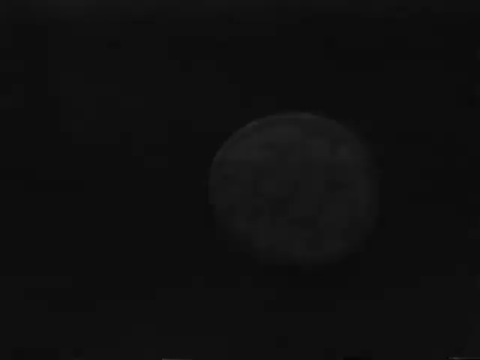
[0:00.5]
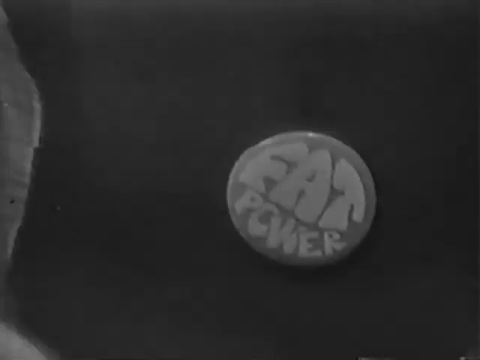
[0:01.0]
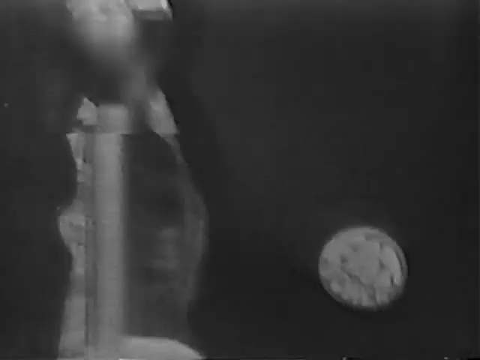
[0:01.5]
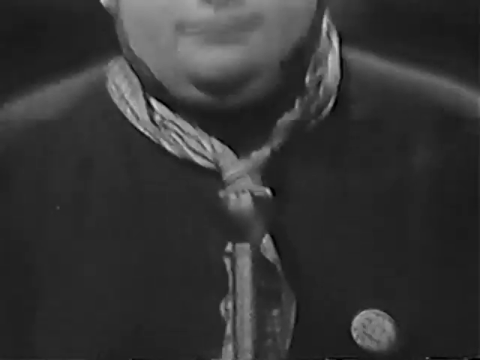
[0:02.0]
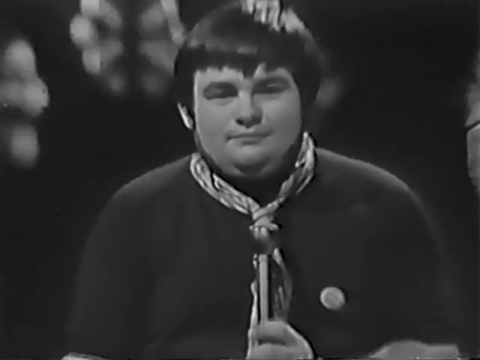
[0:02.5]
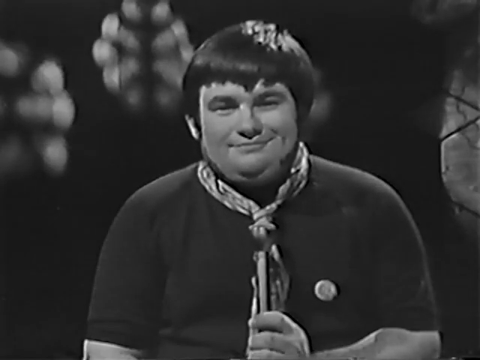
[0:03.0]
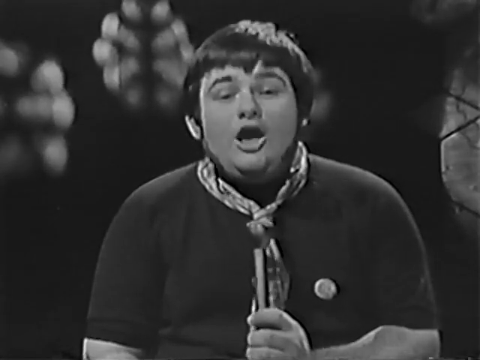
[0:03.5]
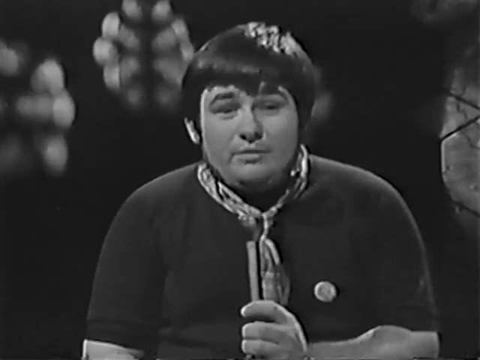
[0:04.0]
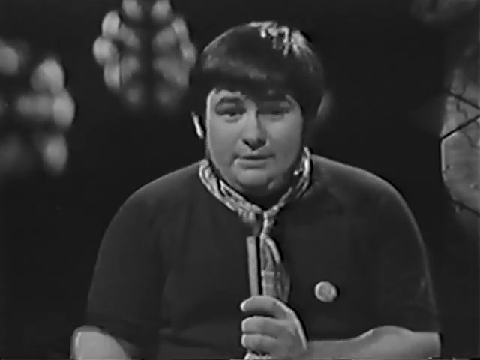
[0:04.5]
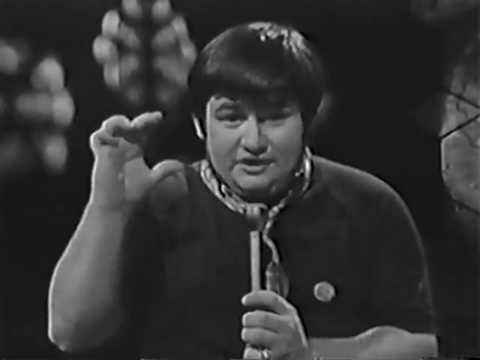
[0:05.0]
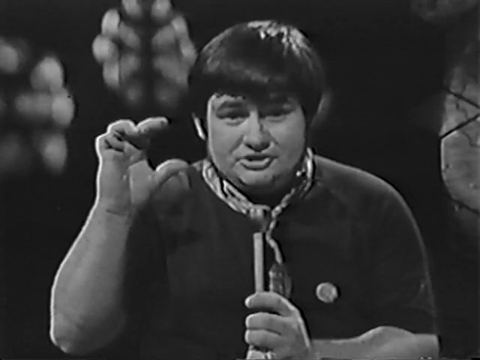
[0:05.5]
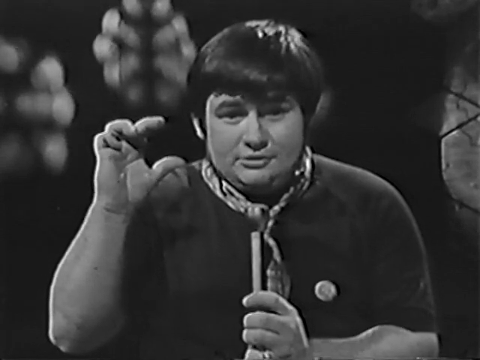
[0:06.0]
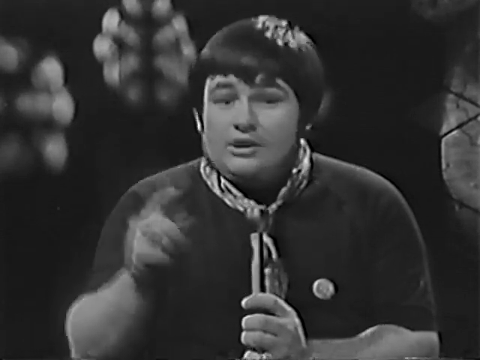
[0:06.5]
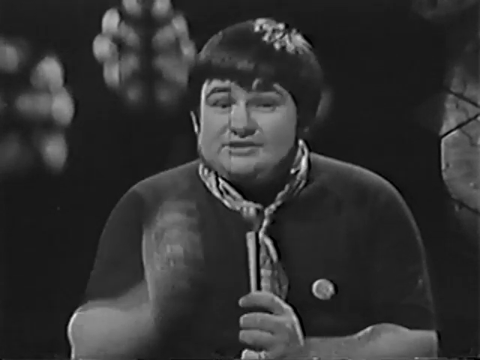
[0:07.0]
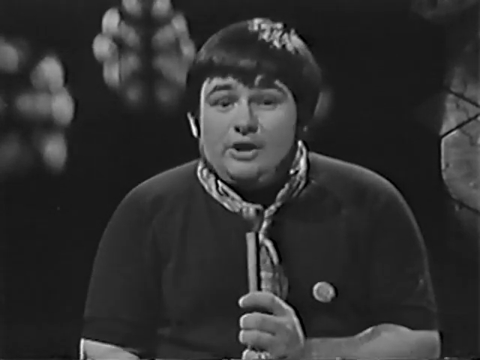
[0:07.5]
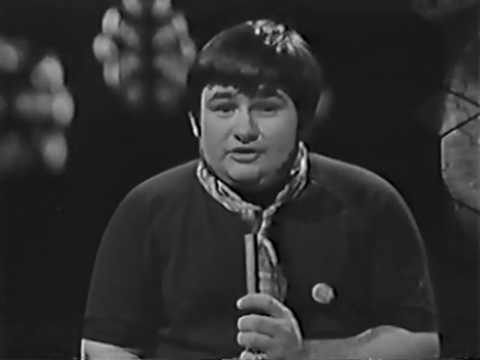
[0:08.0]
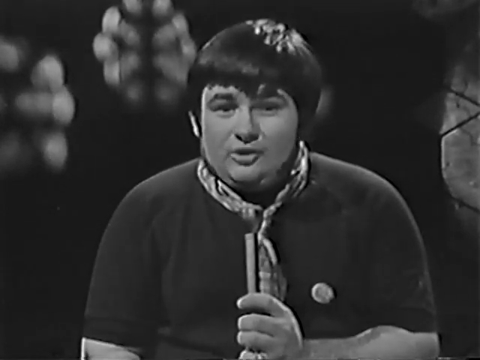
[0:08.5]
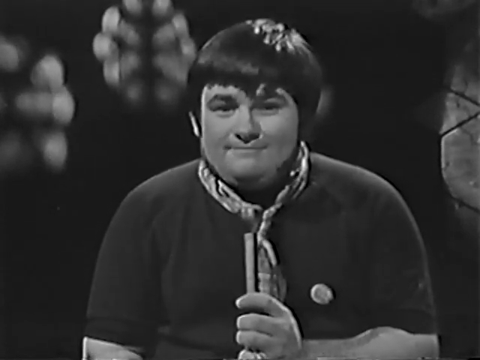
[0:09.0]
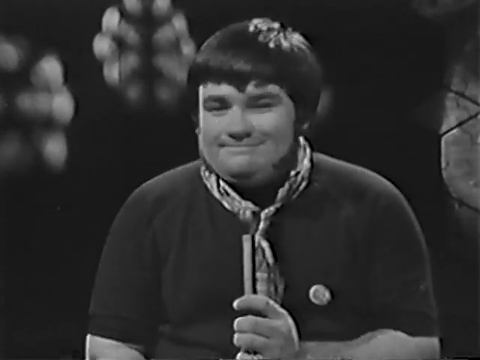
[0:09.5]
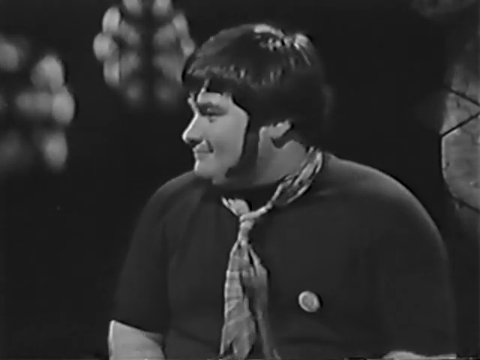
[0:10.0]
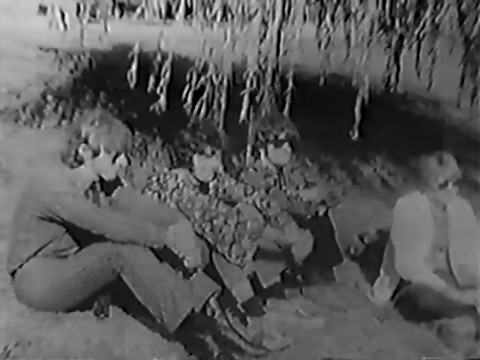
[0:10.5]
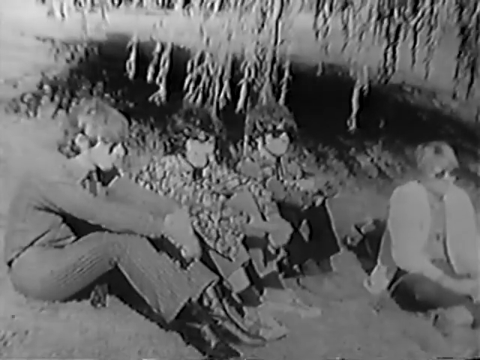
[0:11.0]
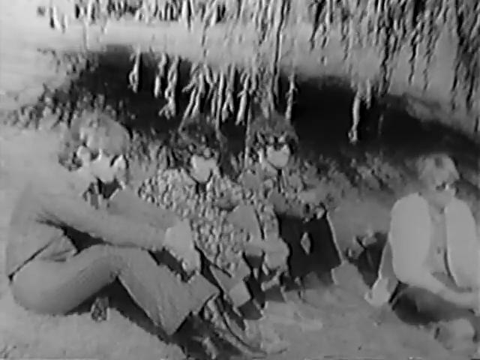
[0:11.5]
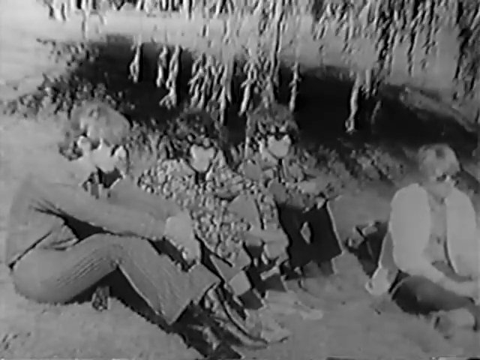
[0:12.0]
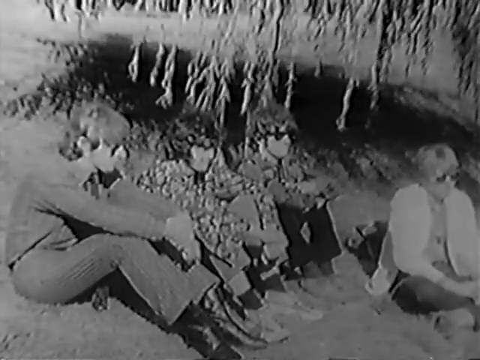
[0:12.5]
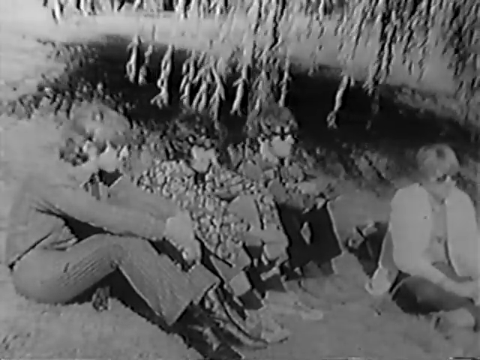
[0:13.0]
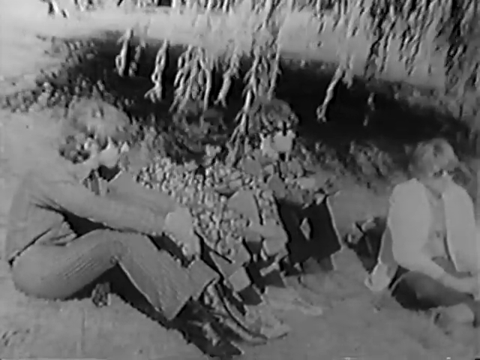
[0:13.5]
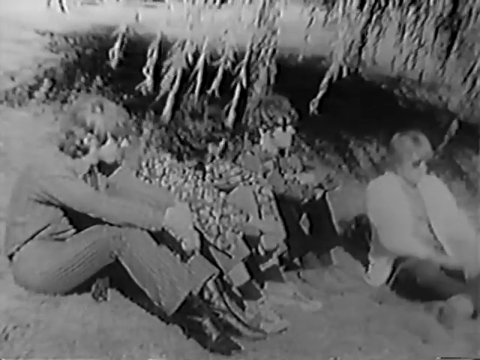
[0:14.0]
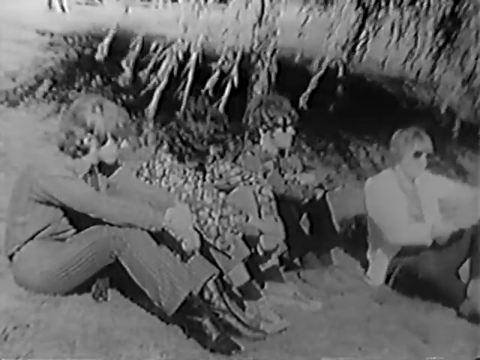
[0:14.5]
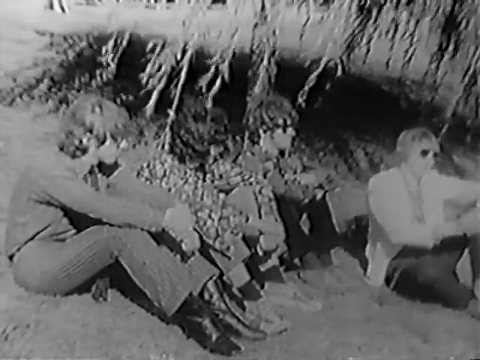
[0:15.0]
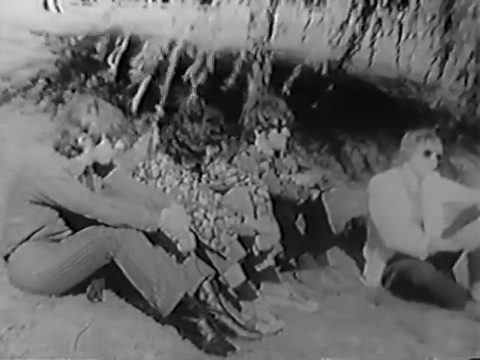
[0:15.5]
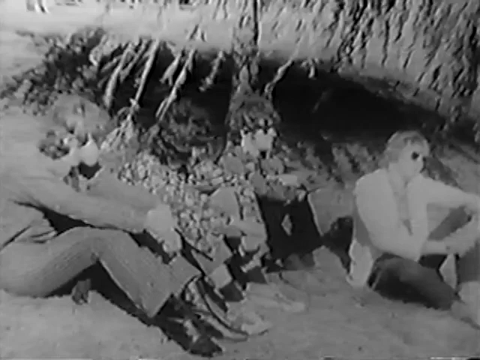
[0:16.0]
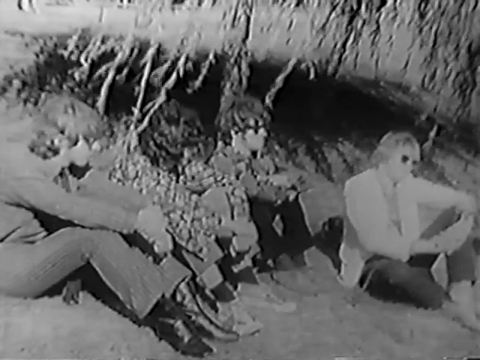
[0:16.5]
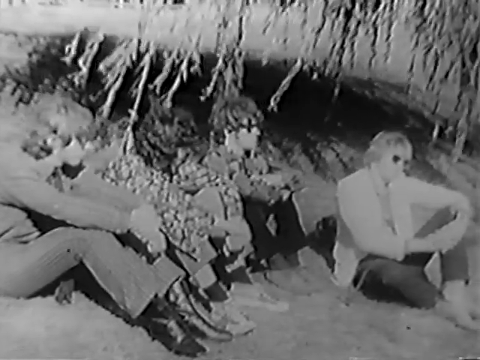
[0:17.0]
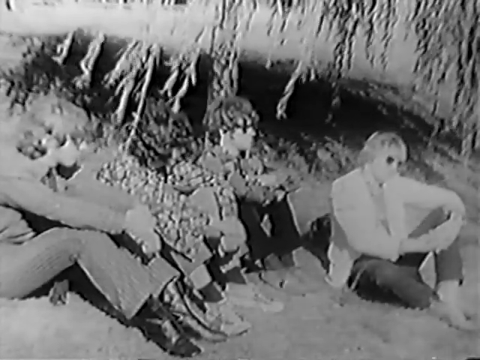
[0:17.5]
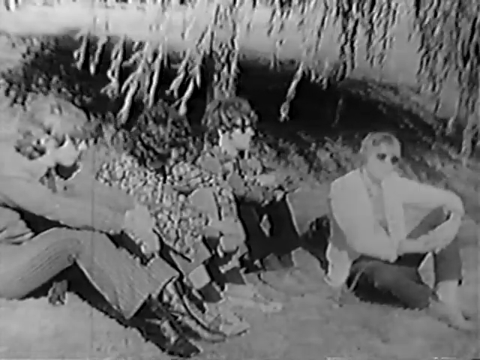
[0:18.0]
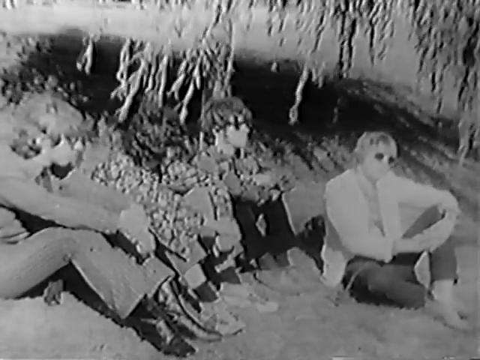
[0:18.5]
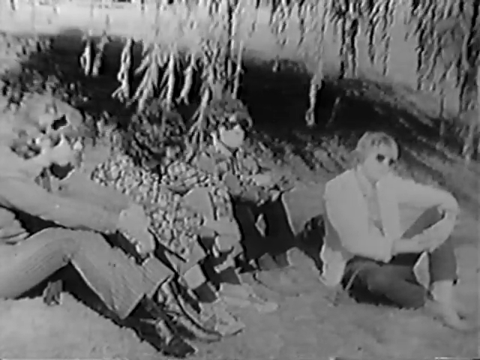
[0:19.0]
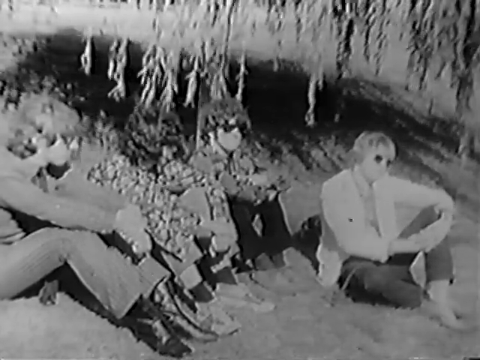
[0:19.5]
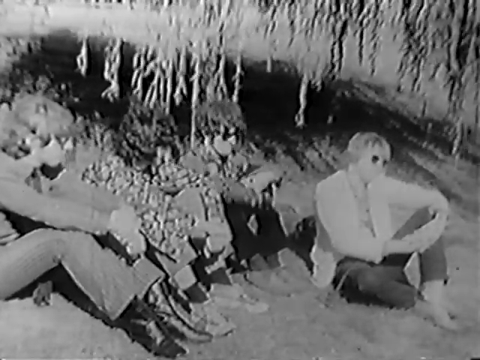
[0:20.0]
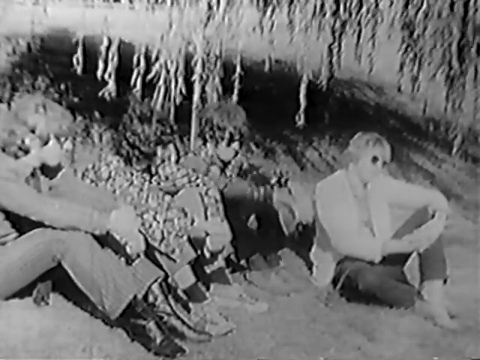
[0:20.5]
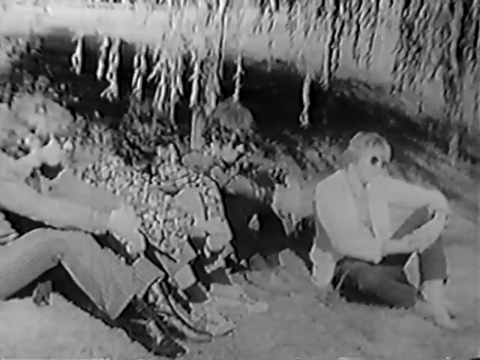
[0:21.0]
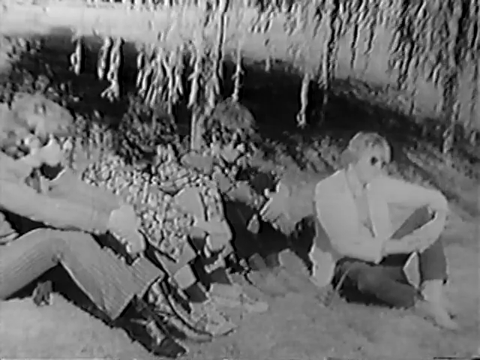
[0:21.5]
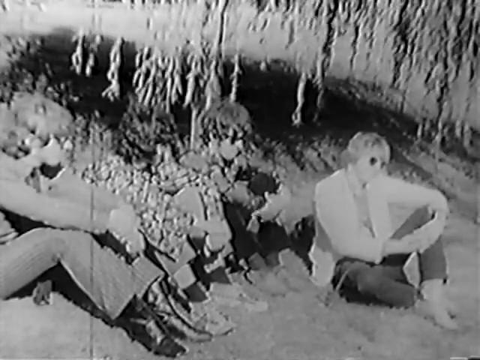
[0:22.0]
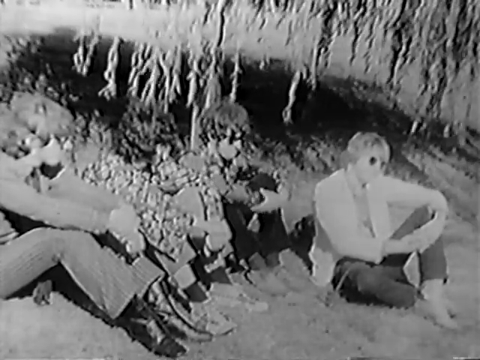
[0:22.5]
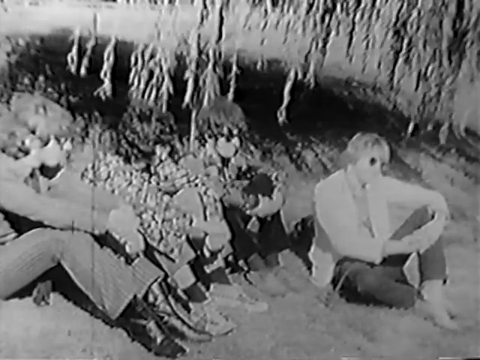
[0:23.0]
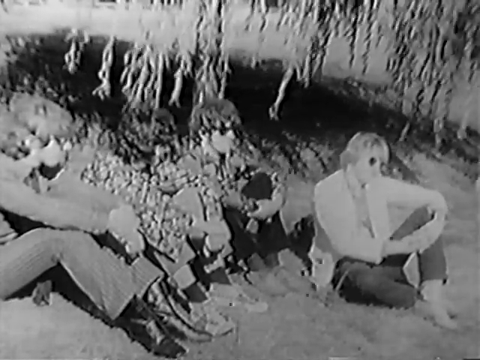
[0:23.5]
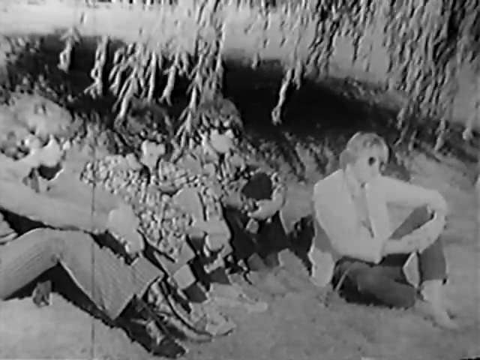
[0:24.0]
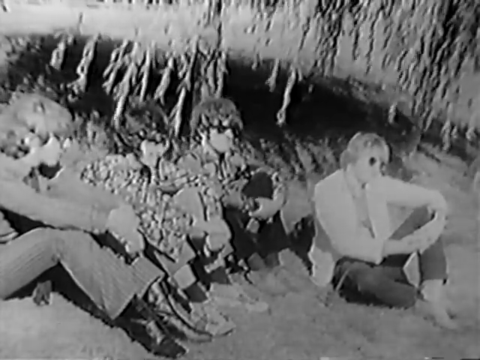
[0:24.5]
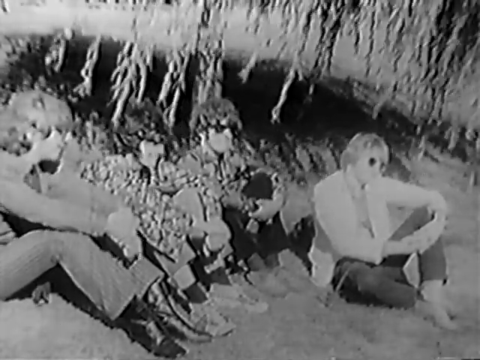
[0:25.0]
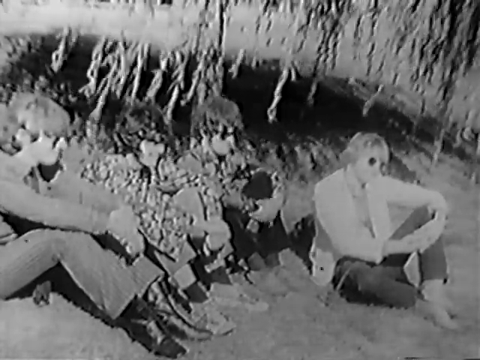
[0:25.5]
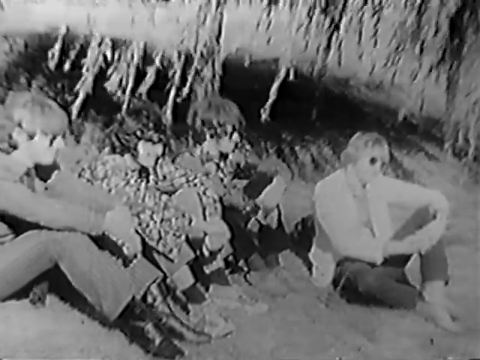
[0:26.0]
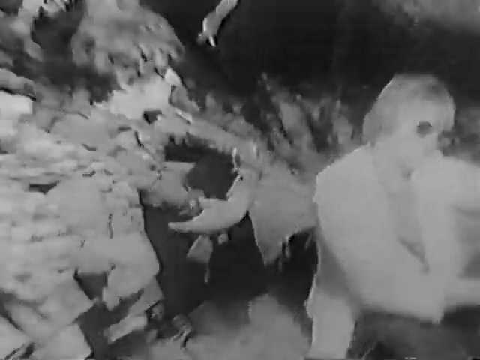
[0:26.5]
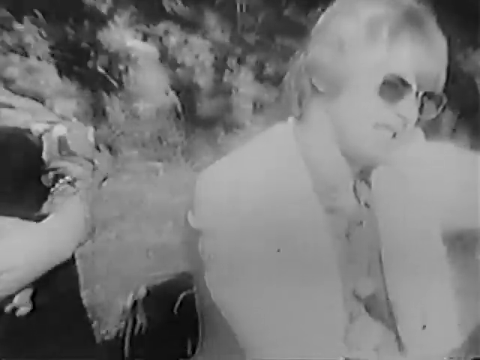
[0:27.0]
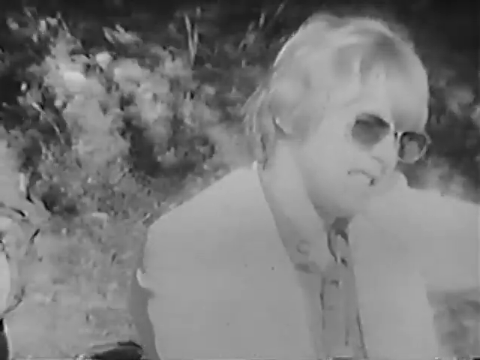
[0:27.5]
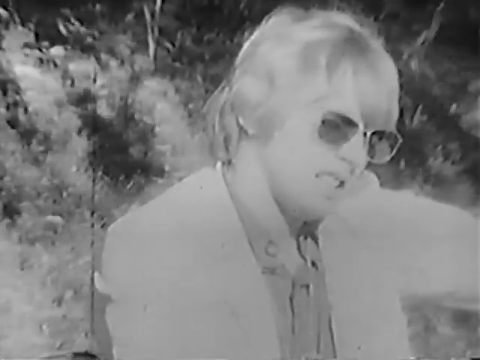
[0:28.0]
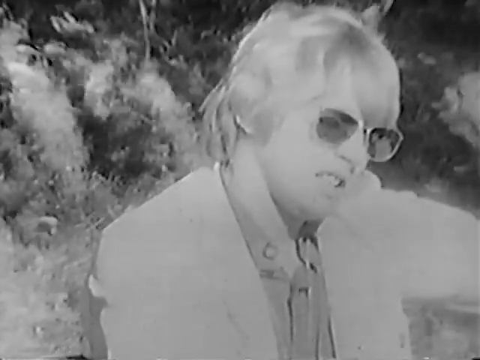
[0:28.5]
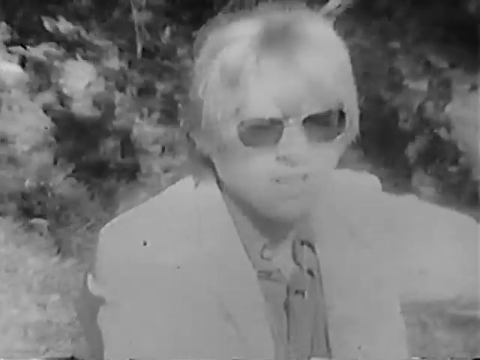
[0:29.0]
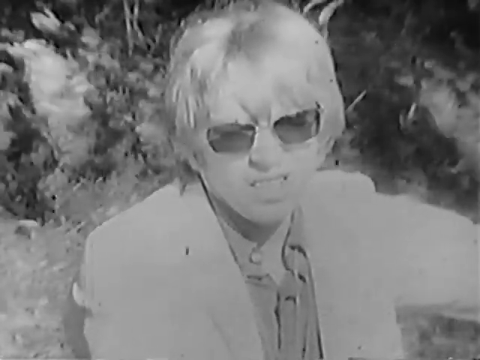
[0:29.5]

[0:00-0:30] The black-and-white video looks like it might be from the 1960s or early 70s. It opens on a close-up of a button a man is wearing that says "fat power" in a kind of hippie-style graphic. The camera pans out to show him from the chest up: he has a kind of patterned scarf, sort of a kerchief, around his neck, a dark long-sleeve sweater, a black, sort of Beatles-style haircut, and very long sideburns, and he is Caucasian. The background is black with some design graphics and some lighting. He is talking and has one of those tall, skinny microphones; he says something into the microphone and then turns to his right. The scene switches to what looks like a video shot of four individuals sitting on a hillside, talking or being interviewed; they all seem to be facing to the right. Three of them are together and one is sitting in front. The camera eventually focuses on the man in front, who is in lighter colors: a lighter-colored jacket, blonde hair, and glasses. They all have shaggy, 1970s-style hair. Of the other three, two have on patterned shirts, and they wear sunglasses; the one in the middle has dark shaggy hair and the others have slightly lighter shaggy hair. They sit with their legs pulled up and their arms around their knees. The one in front has just his left knee up with his arms around it, and he wears a white jacket and apparently darker pants.